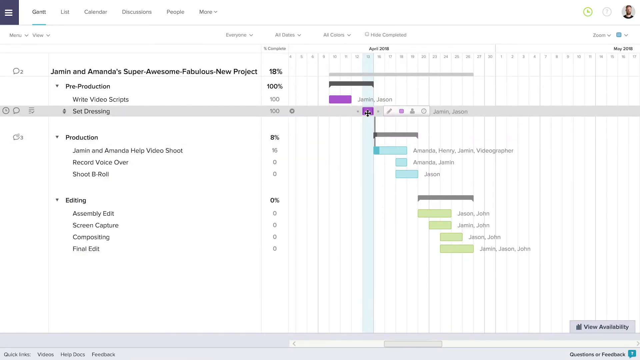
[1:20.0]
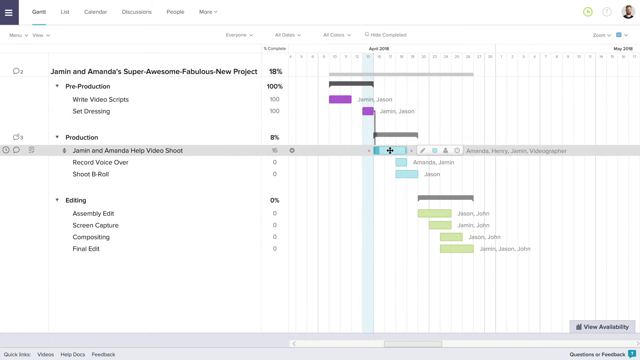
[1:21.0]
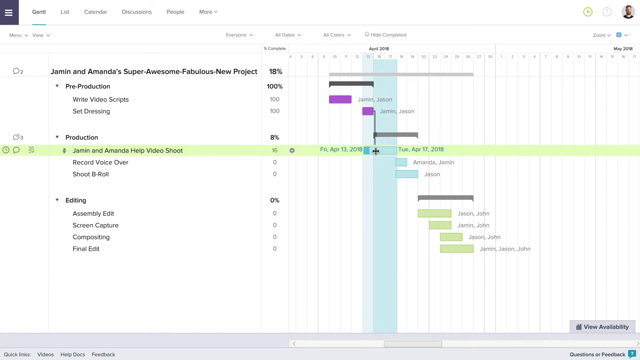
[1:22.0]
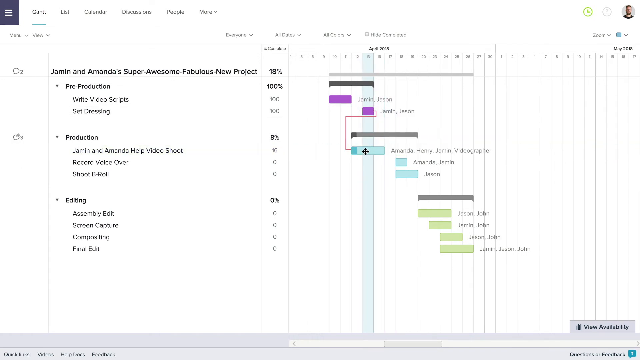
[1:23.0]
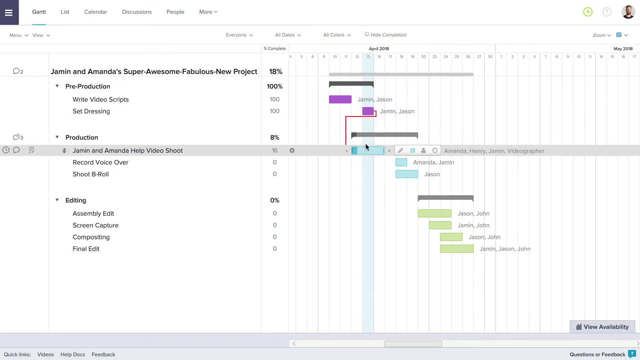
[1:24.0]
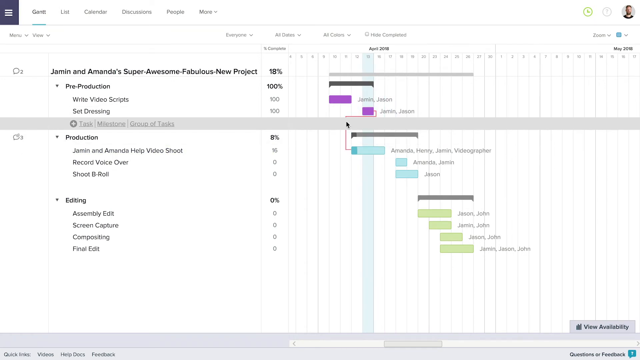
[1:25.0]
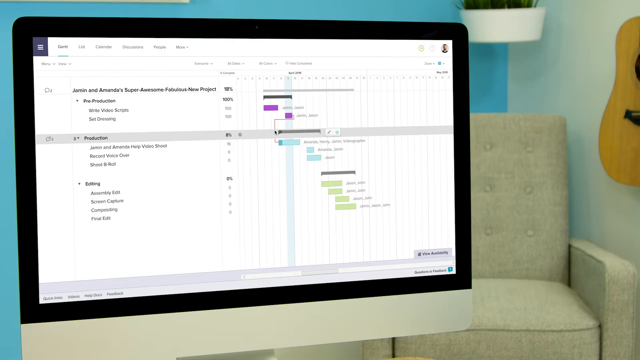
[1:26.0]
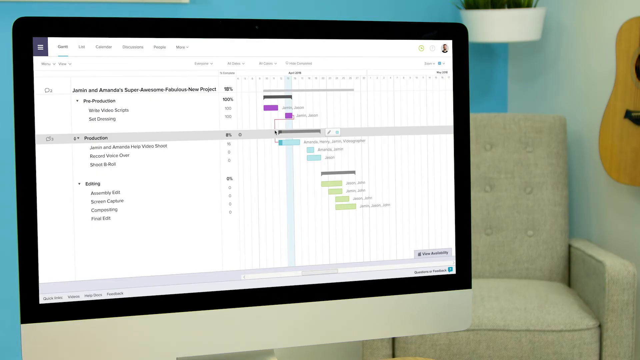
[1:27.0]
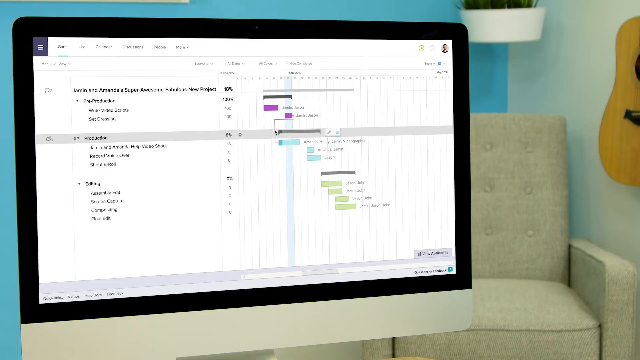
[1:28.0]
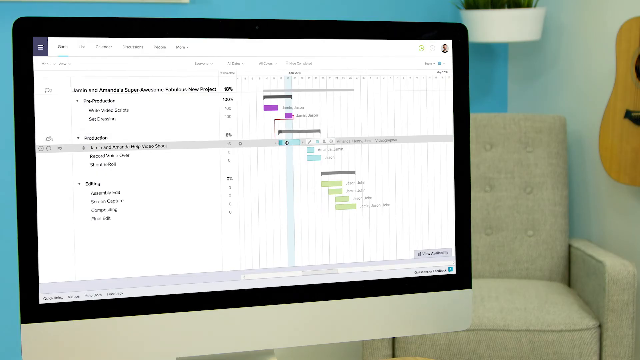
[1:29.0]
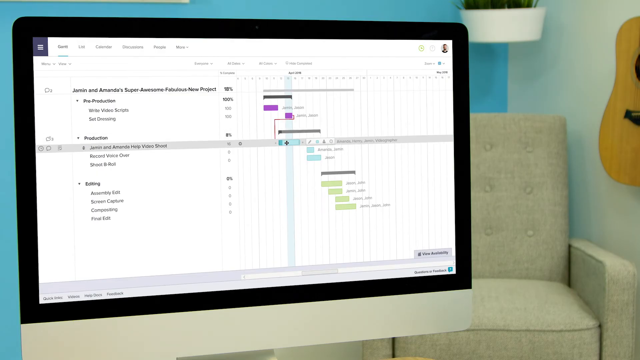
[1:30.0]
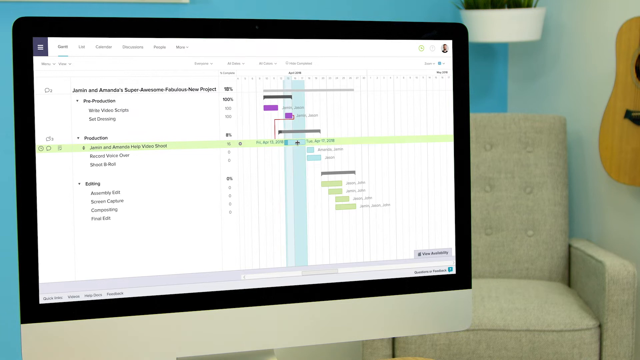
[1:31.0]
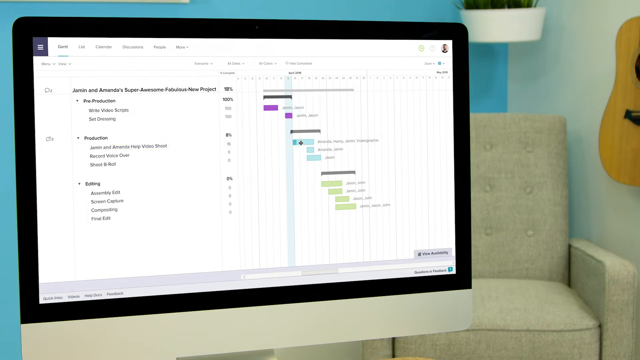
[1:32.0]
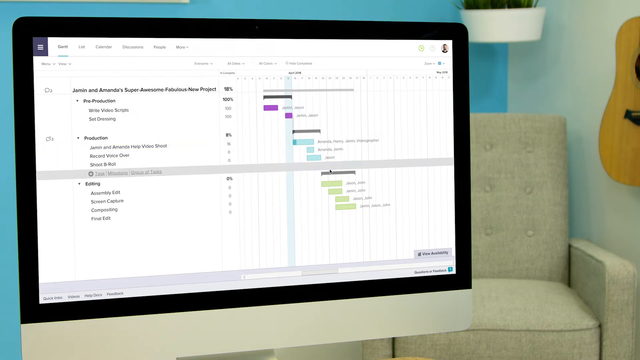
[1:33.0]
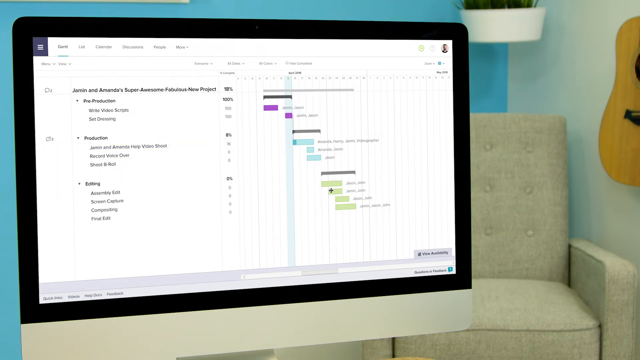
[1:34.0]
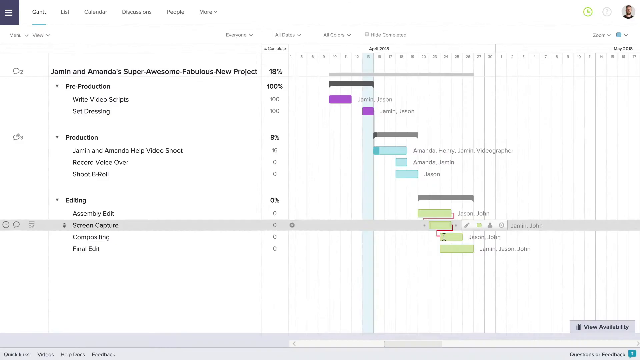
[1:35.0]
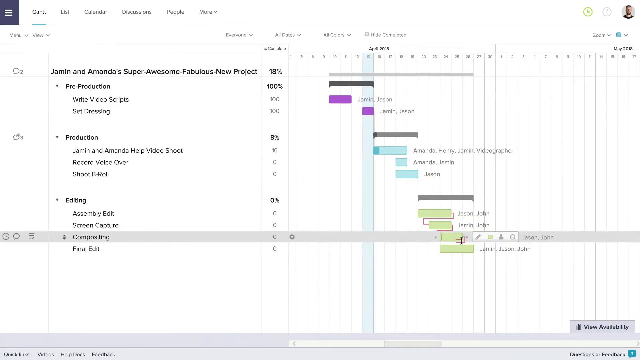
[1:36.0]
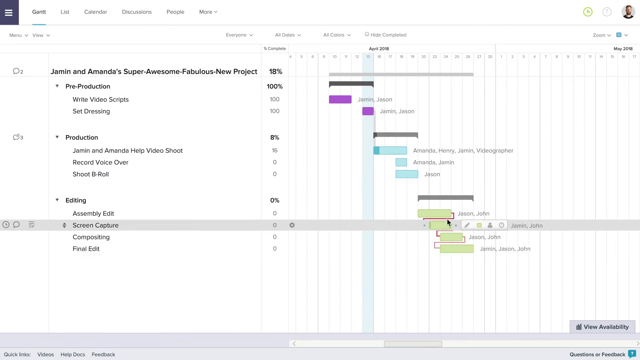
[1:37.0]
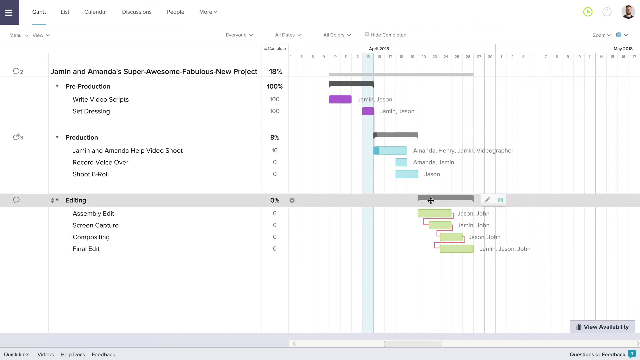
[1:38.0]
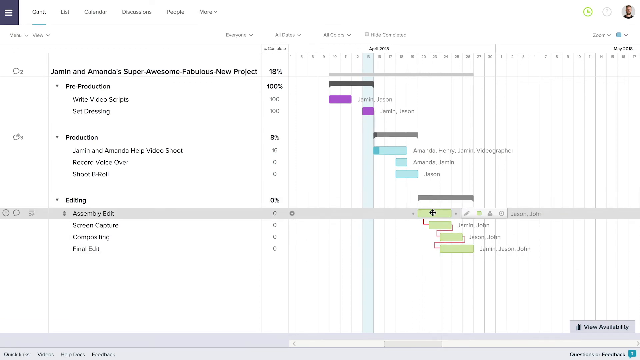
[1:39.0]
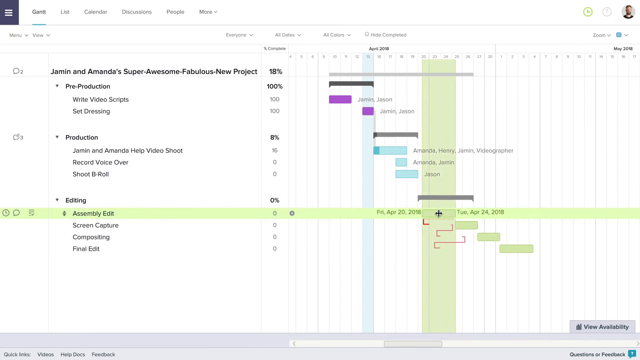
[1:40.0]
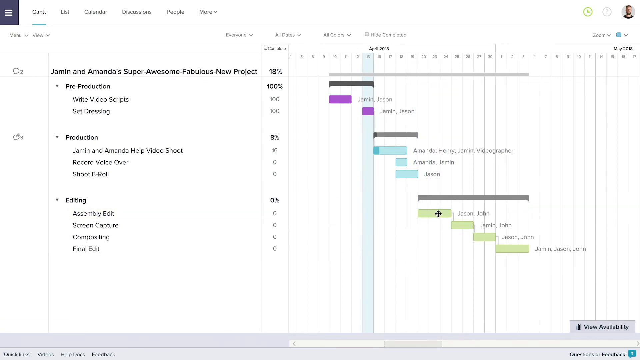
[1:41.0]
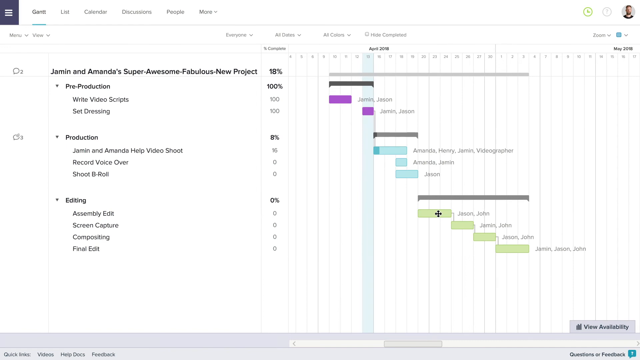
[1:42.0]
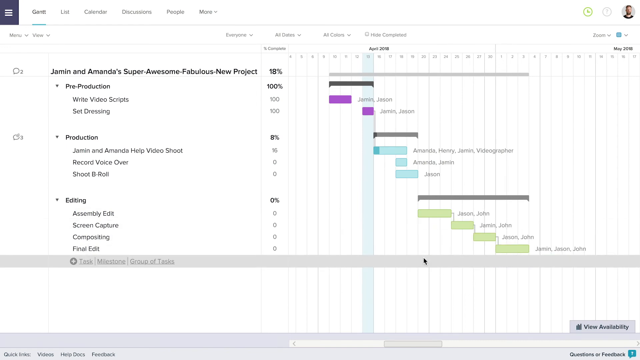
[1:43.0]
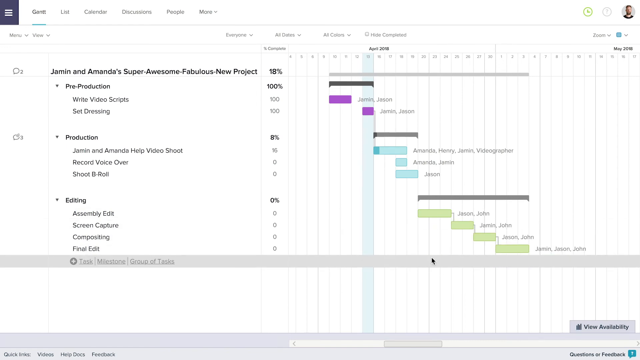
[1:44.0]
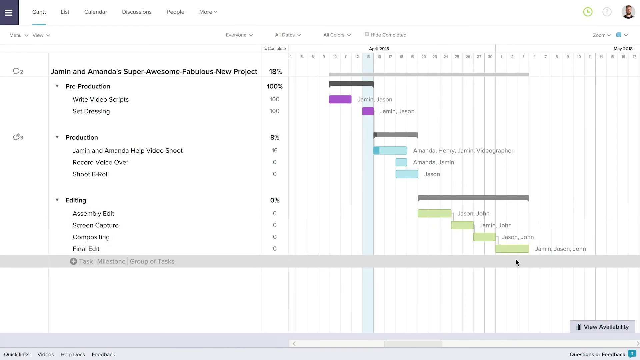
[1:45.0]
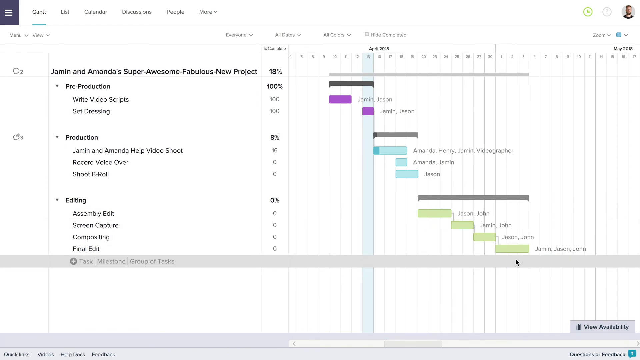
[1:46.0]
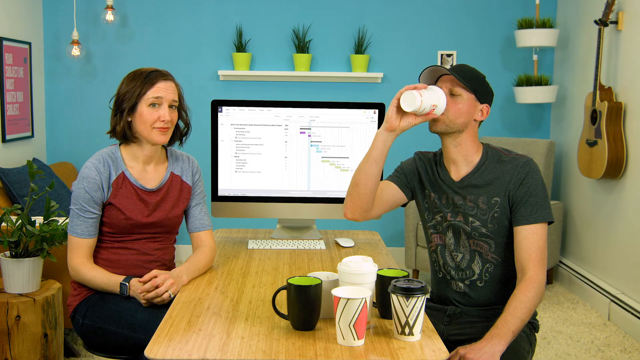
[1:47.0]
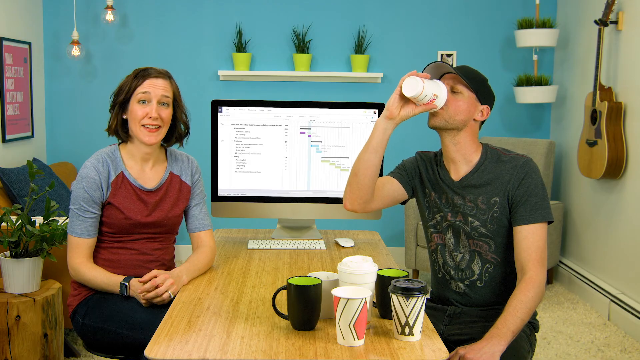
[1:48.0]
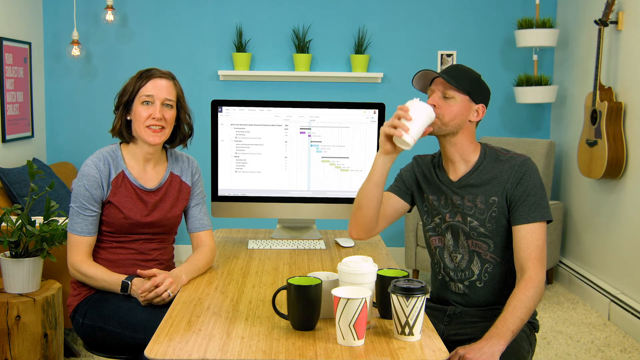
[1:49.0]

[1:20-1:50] A screen shows "list, calendar, discussions, people, more, menu, view, everyone, all dates, all colors, hide completed," with a zoom button on the right side and "May 2018" under it. Bold black and regular text reads "Jamin and Amanda super awesome fabulous new project 18 percent pre-production 100 percent write video scripts 100 set dressing 100 production 8 percent Jamin and Amanda help video shoot 16 record voiceover 0 shoot b roll 0 editing 0 assembly edit 0 screen capture 0 compositing 0 and final edit 0." The mouse hovers over a small purple box; other boxes are gray, black, light blue and green. The pointer hovers over a row called set dressing, moves down to the Jamin and Amanda help video shoot row, clicks and moves it, then goes up to a row above. The view transitions to the computer itself, showing the screen and part of the computer, with a chair, a guitar and some plants in the background. One of the blue boxes is clicked and dragged toward the right, then the page scrolls down to a section called screen capture. The computer screen goes full size again, and some green boxes are sort of connected together. The pointer goes to a section called editing, clicks on assembly edit and moves it, then goes down to a task, milestone, group of tasks section. Then the two people and the computer screen are shown. The man takes a sip from a white cup, with a bunch of other cups in front of him: two black mugs and some paper cups, one with a lid and another in the center with a lid. The woman talks to the camera and smiles while the man drinks from the cup.